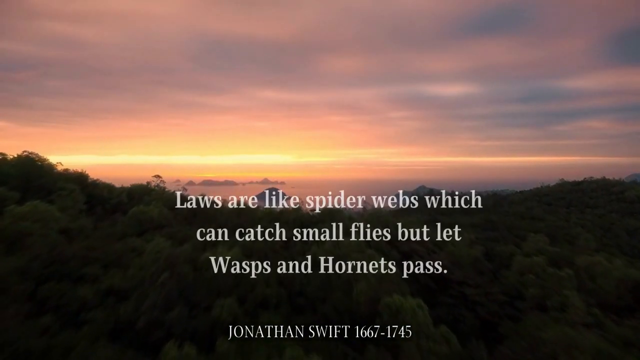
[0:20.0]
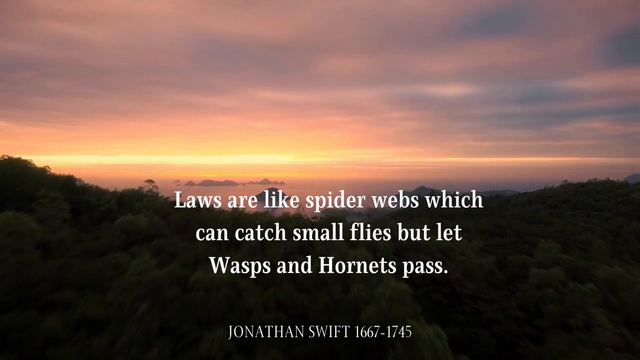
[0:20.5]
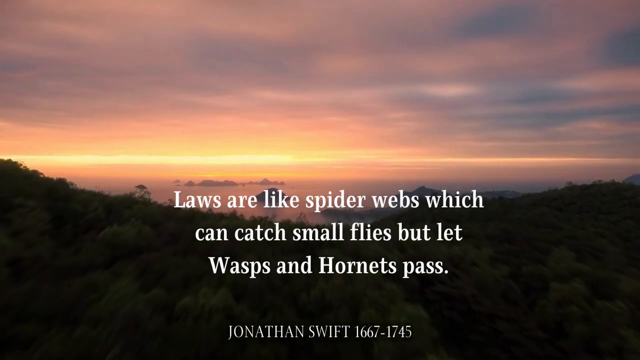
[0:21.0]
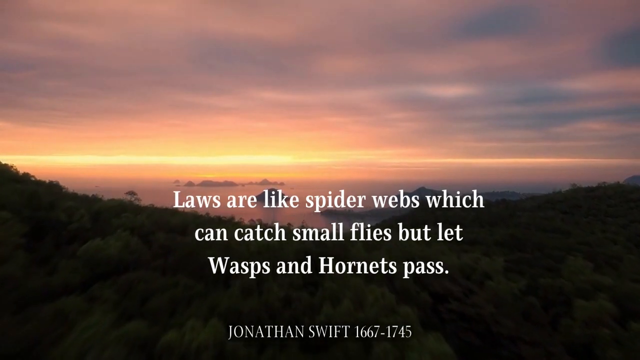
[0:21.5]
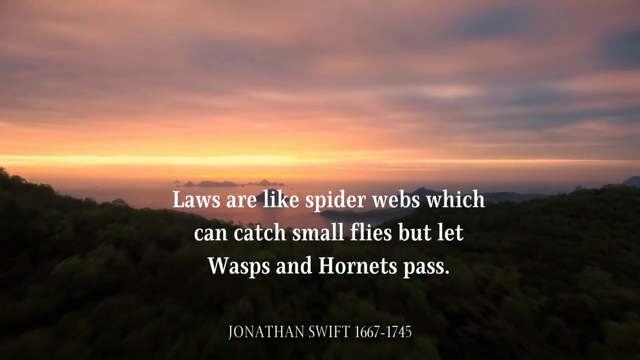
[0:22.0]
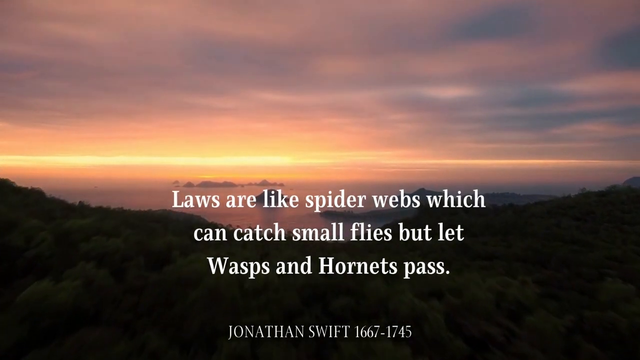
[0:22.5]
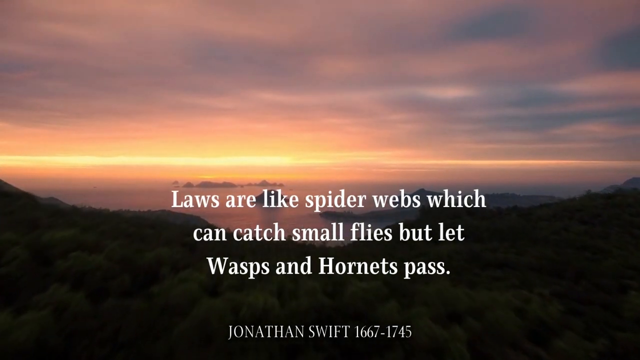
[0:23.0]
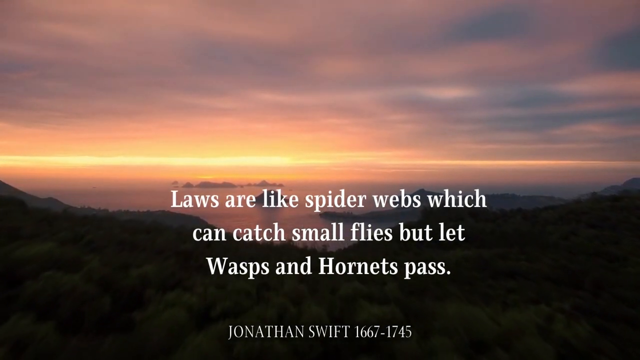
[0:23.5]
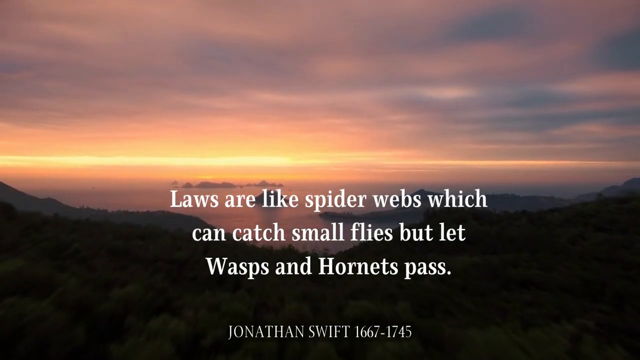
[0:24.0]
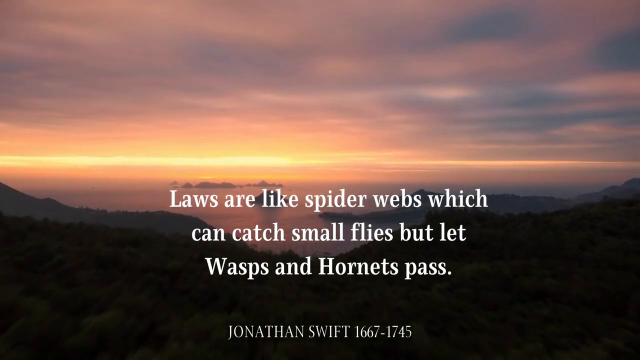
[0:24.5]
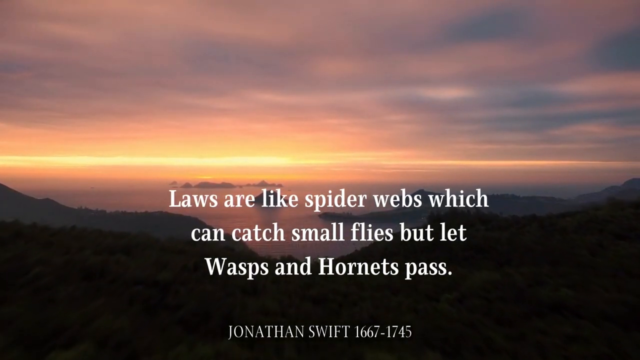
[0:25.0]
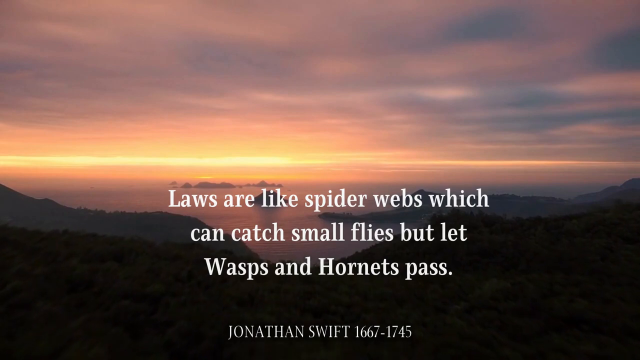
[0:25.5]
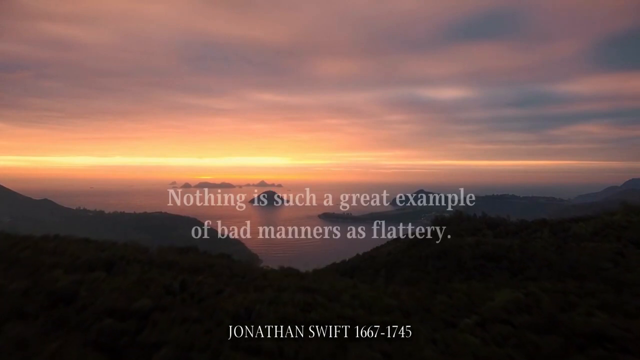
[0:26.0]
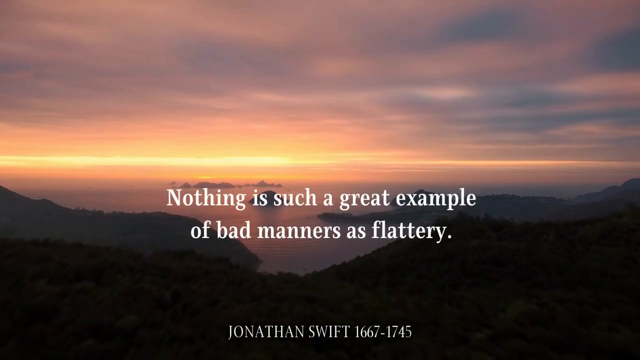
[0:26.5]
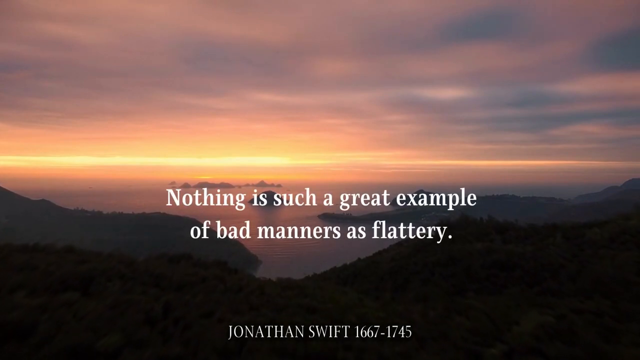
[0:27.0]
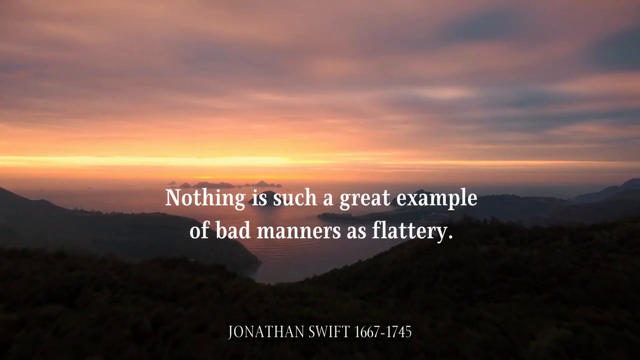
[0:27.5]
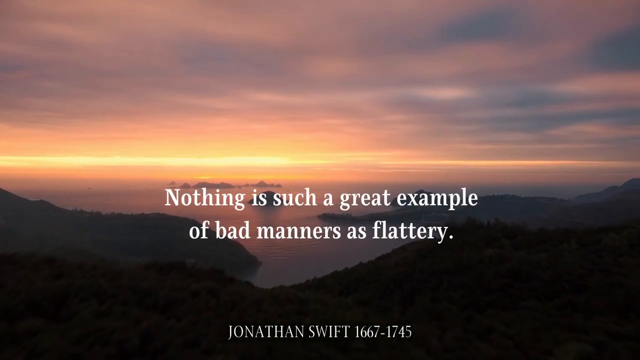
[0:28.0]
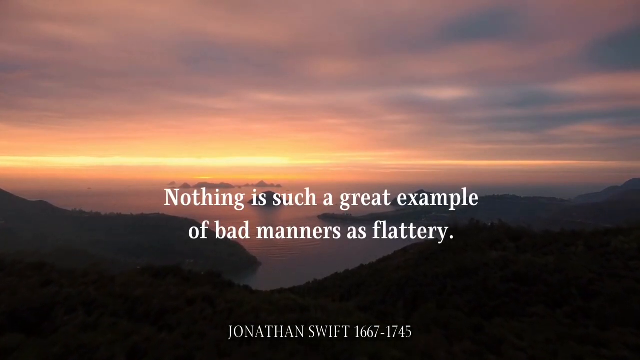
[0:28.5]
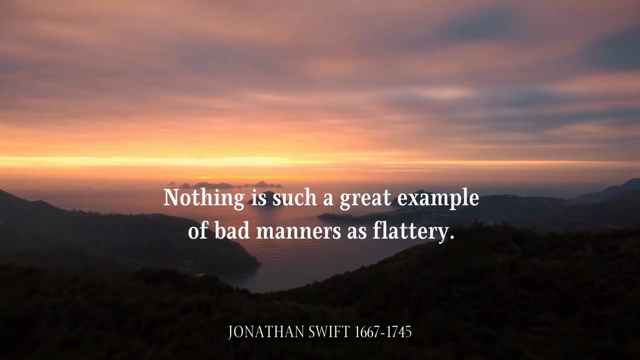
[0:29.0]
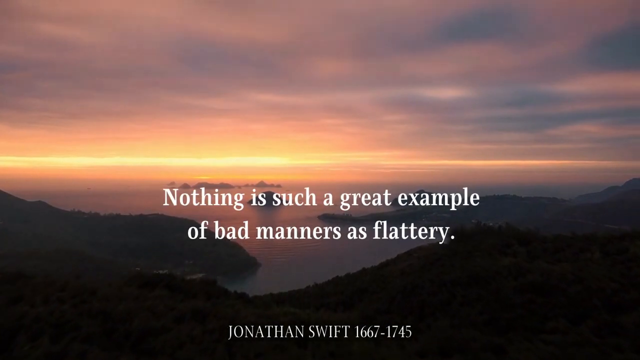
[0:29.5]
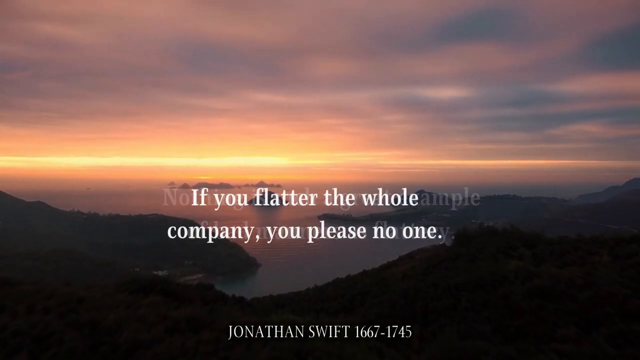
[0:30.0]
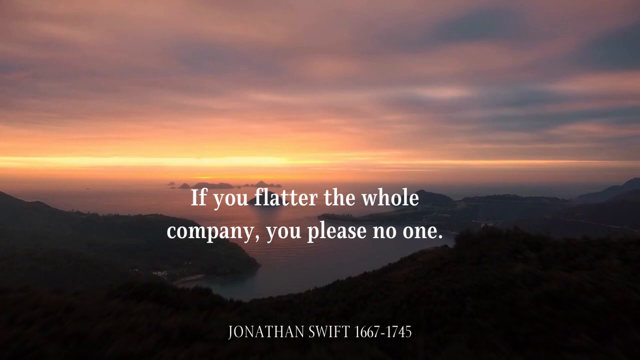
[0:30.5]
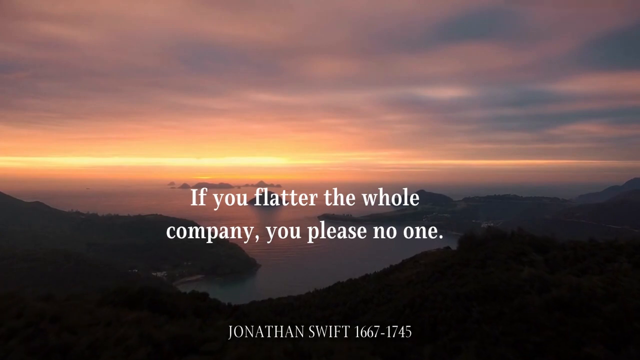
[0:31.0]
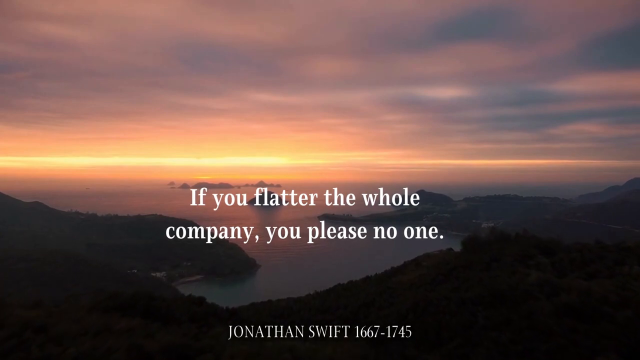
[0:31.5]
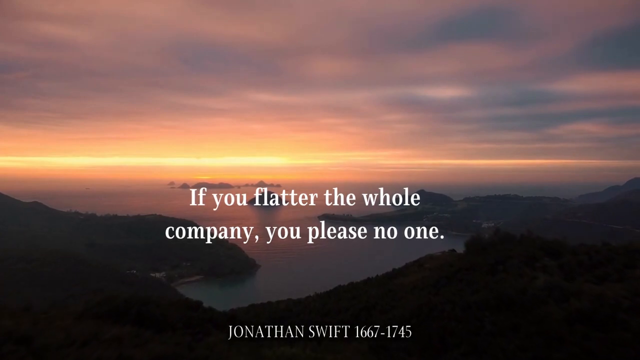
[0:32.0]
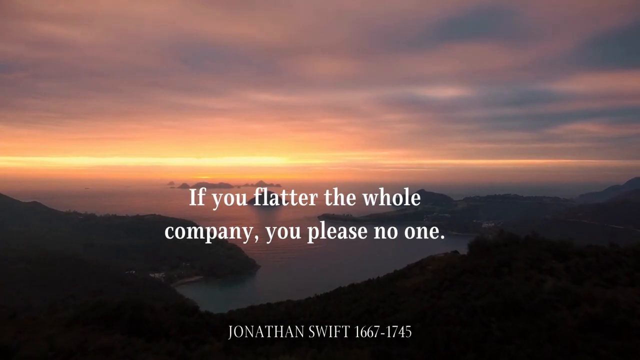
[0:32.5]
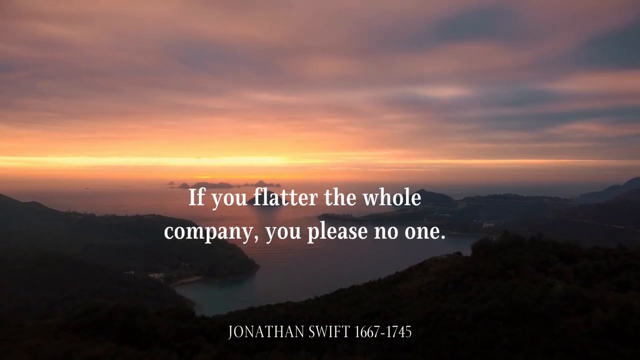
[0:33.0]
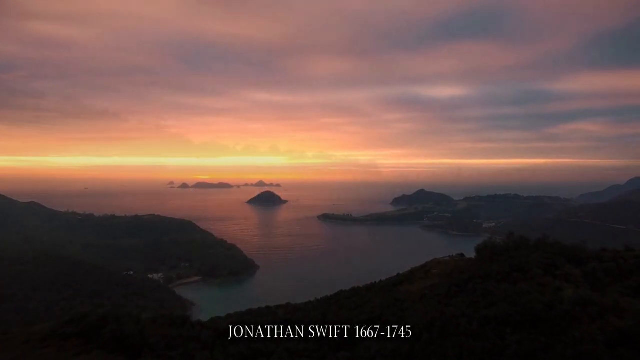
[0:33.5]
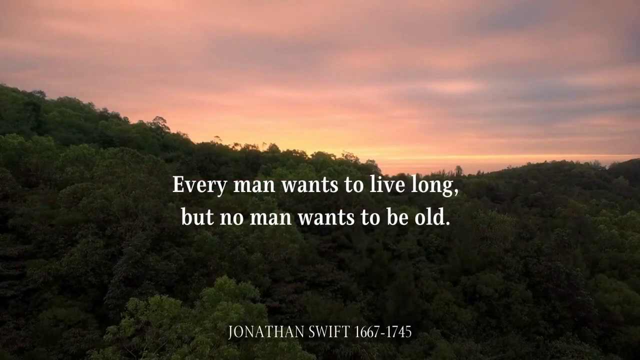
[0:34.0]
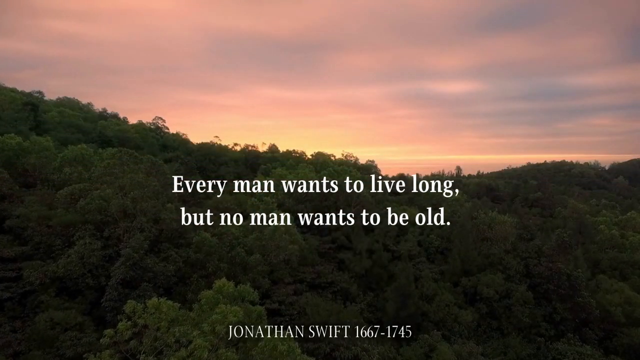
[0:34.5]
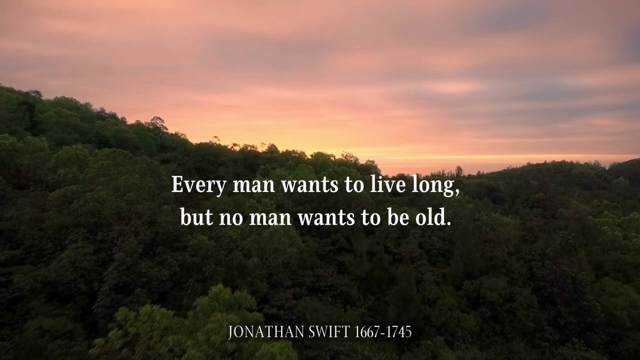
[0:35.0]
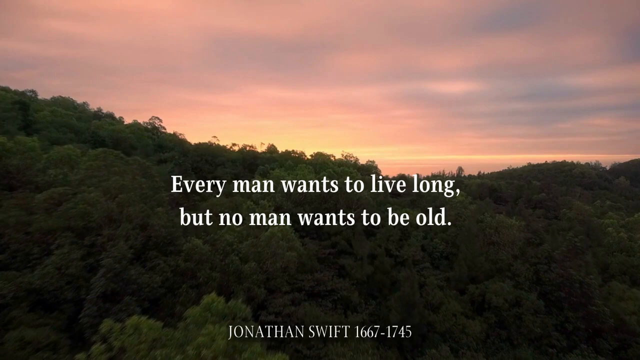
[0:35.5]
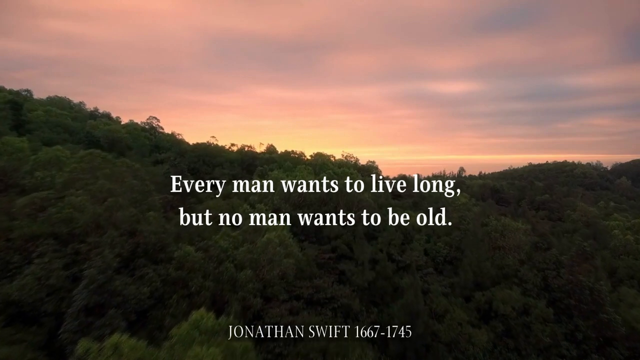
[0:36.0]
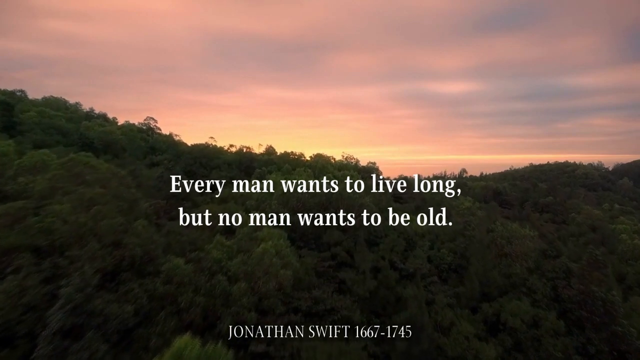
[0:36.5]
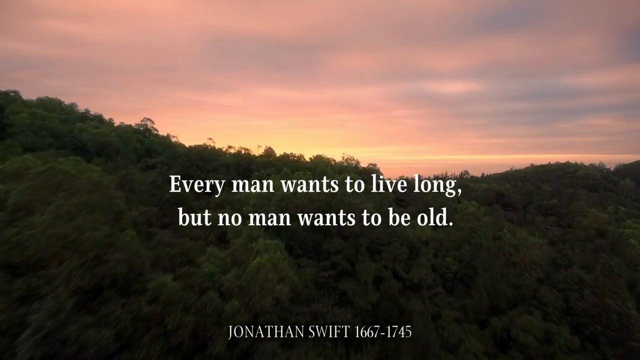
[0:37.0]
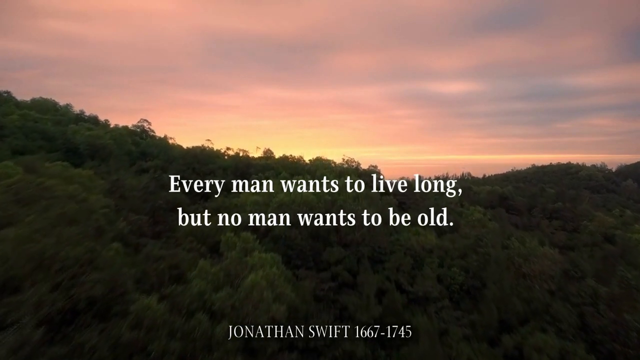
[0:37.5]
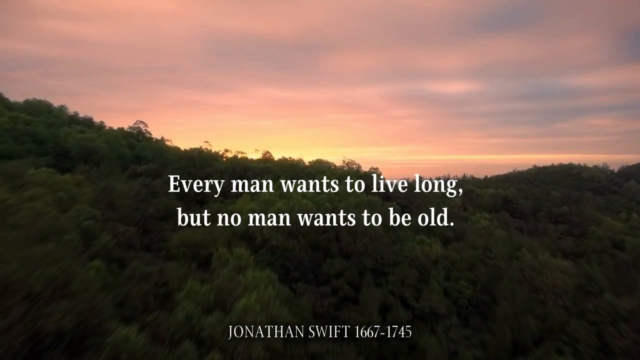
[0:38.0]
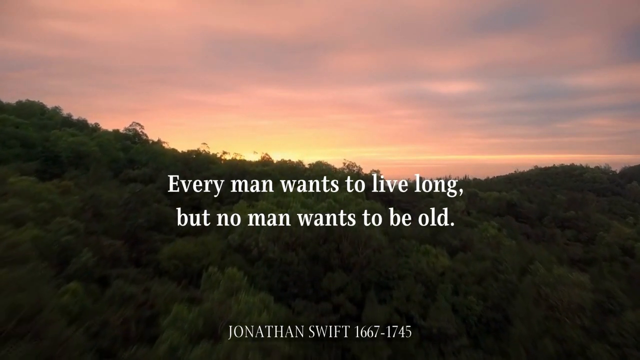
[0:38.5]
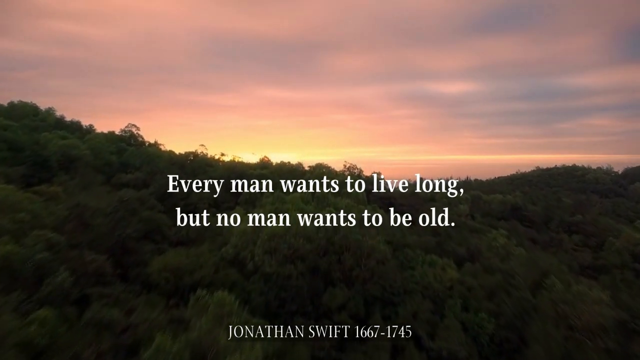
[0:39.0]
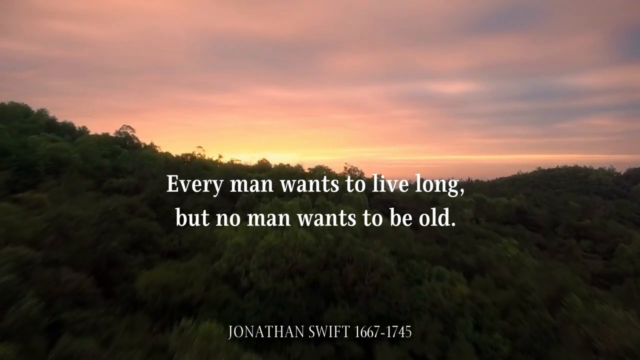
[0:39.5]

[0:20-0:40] A cloudy view over a body of water, with what look like islands in the background and a forested hill in the foreground, something tropical like Hawaii. The sun is either setting or rising in the background, so there is a lot of yellow light between the clouds and the horizon. White words appear in the center of the screen: "laws are like spiderwebs which can catch small flies but let wasps and hornets pass," with "Jonathan Swift 1667 to 1715" at the bottom. The camera pans forward, moving further toward the body of water. The words disappear and are replaced by "nothing is such a great example of bad manners as flattery," then "if you flatter the whole company, you please no one," and then "every man wants to live long but no one wants to be old." The view then changes to looking at the trees themselves rather than the body of water.